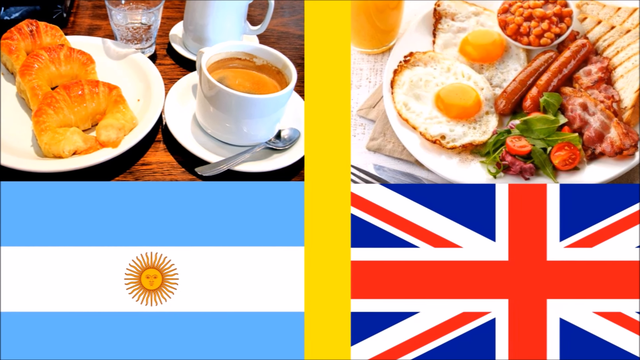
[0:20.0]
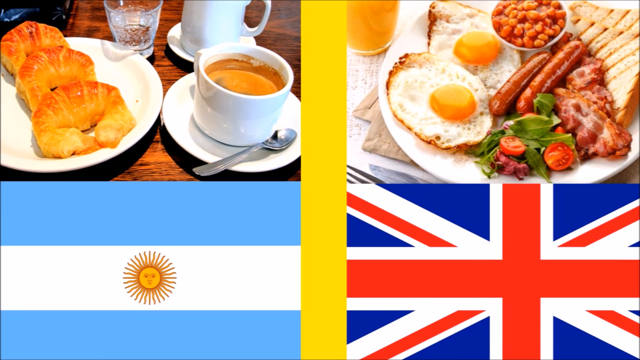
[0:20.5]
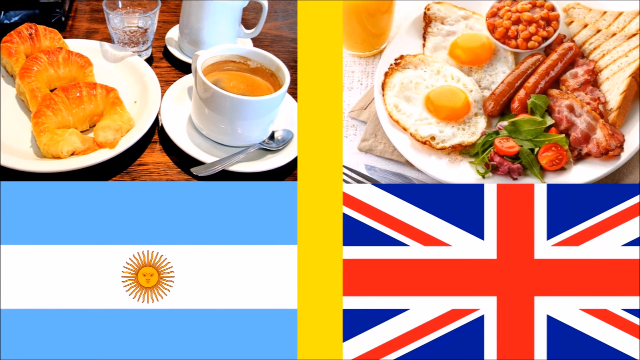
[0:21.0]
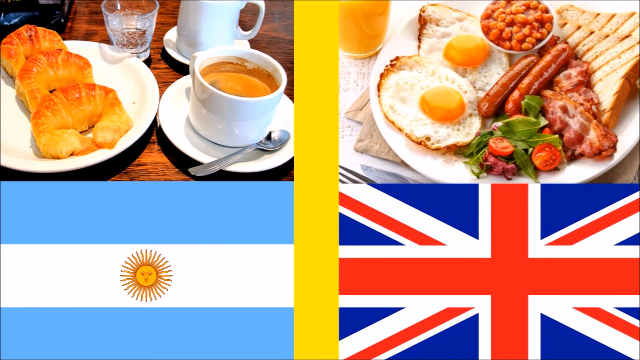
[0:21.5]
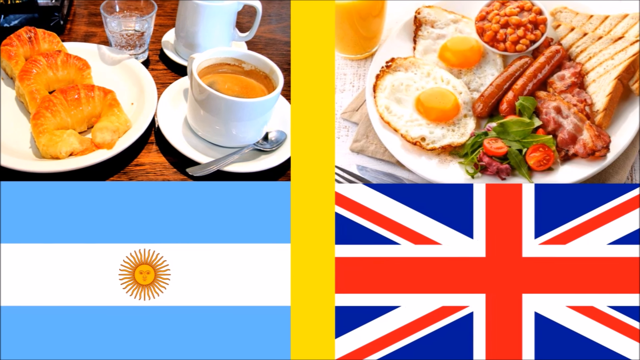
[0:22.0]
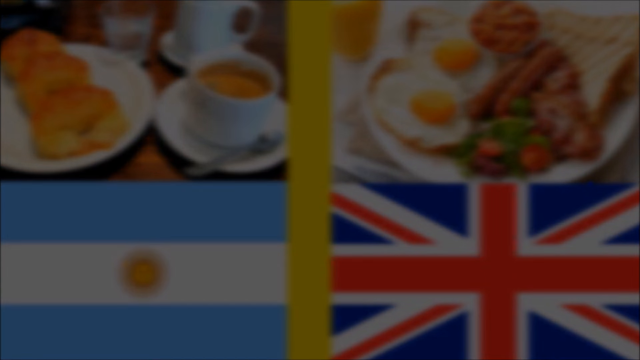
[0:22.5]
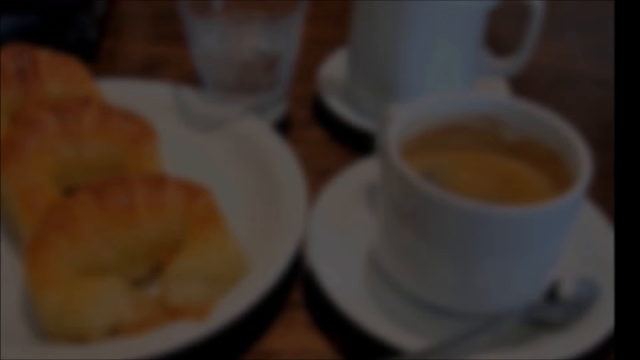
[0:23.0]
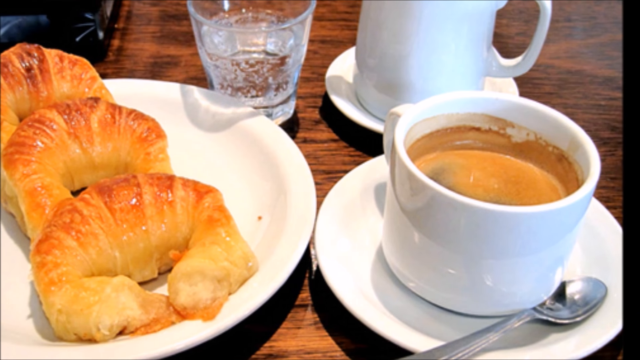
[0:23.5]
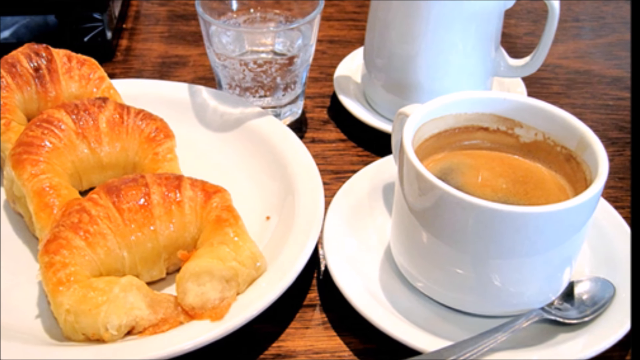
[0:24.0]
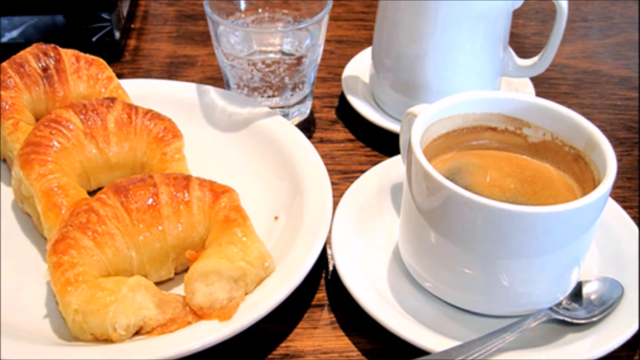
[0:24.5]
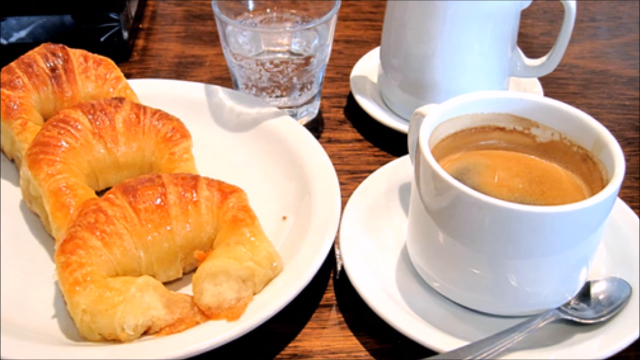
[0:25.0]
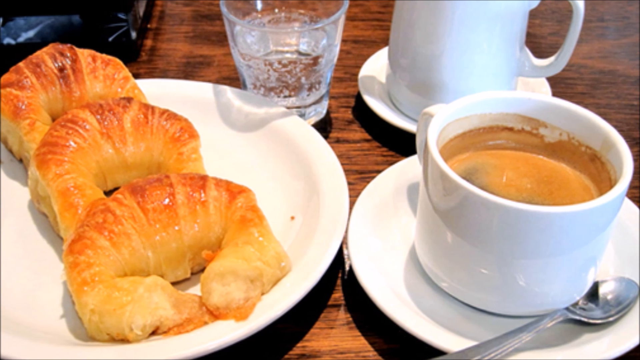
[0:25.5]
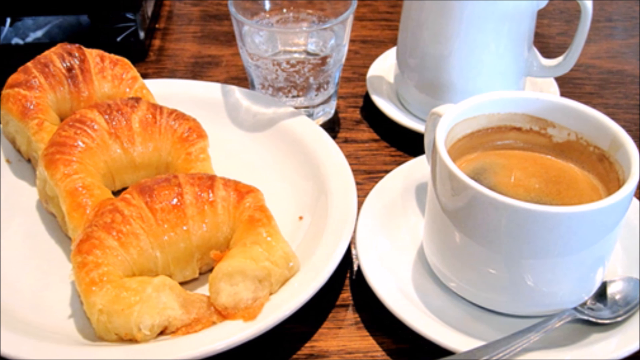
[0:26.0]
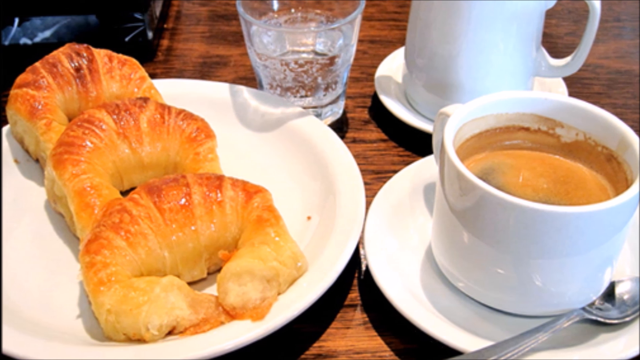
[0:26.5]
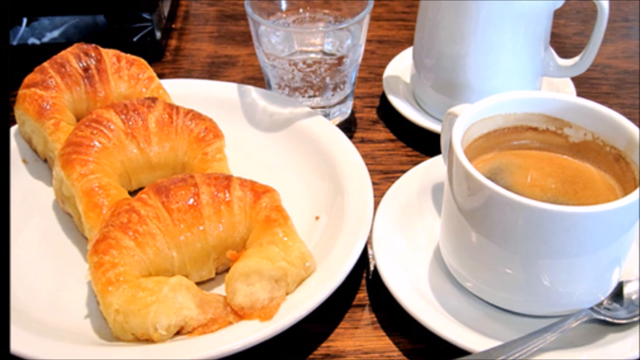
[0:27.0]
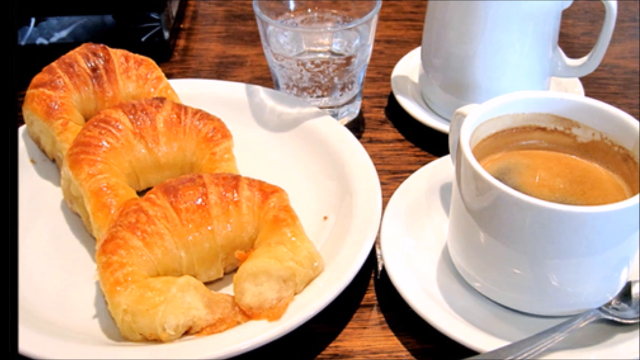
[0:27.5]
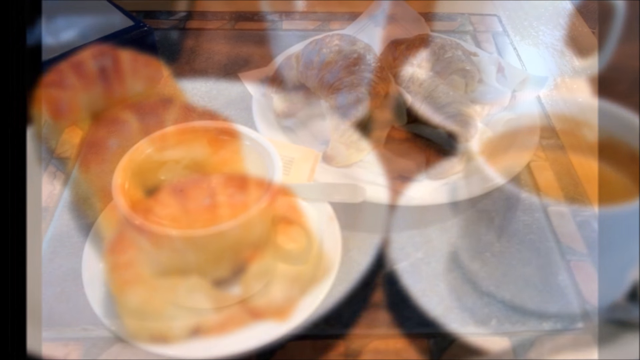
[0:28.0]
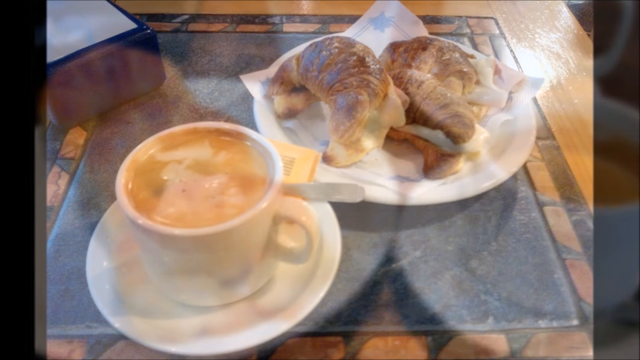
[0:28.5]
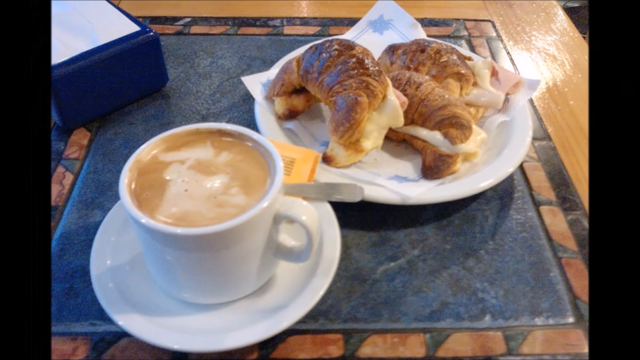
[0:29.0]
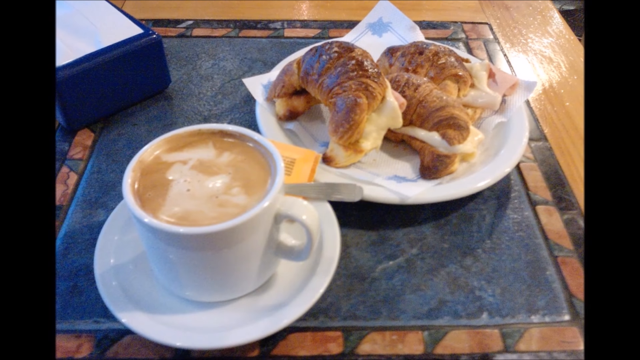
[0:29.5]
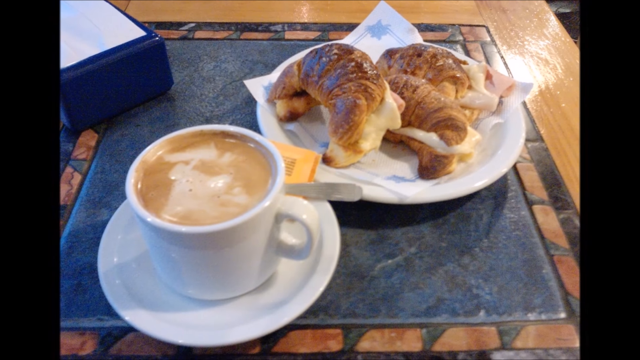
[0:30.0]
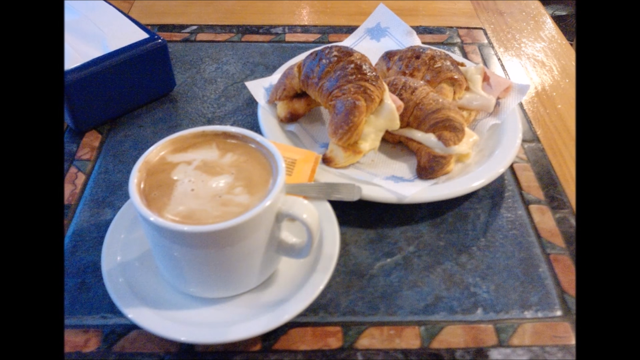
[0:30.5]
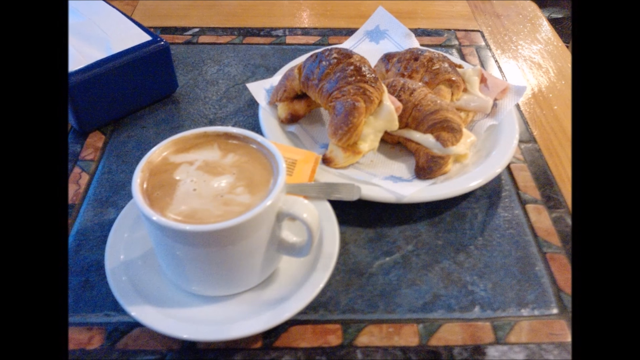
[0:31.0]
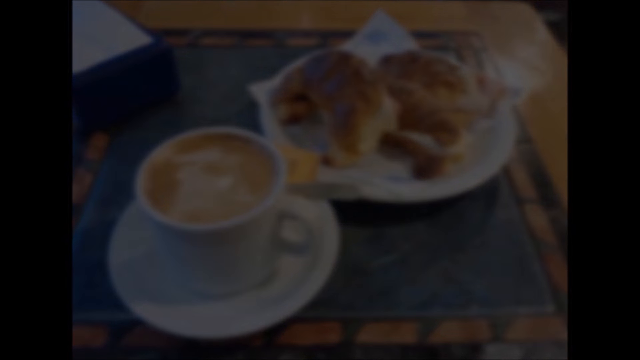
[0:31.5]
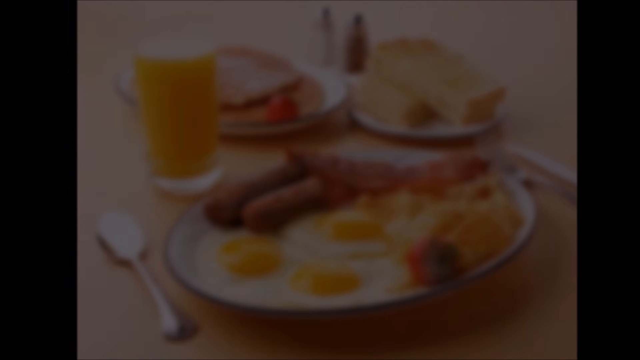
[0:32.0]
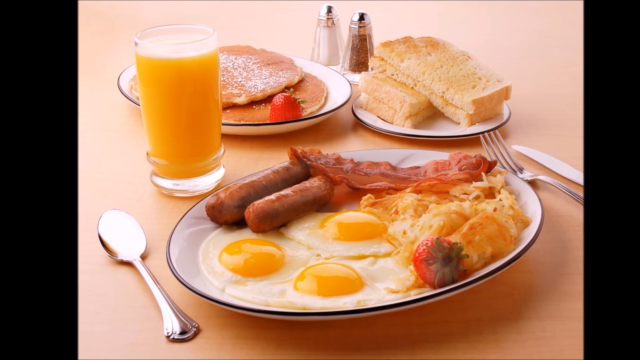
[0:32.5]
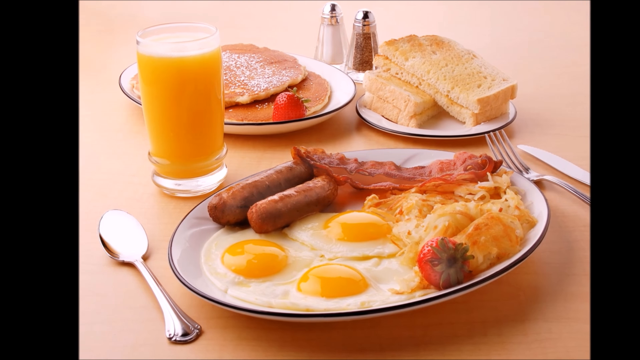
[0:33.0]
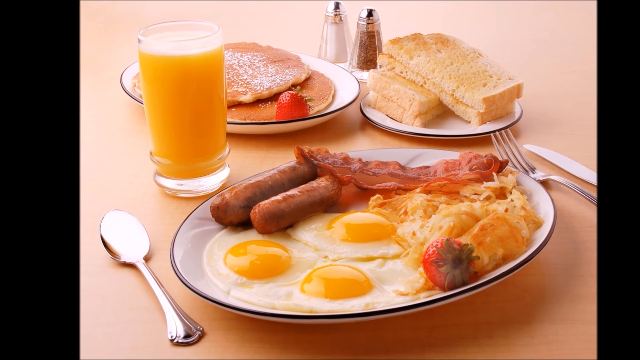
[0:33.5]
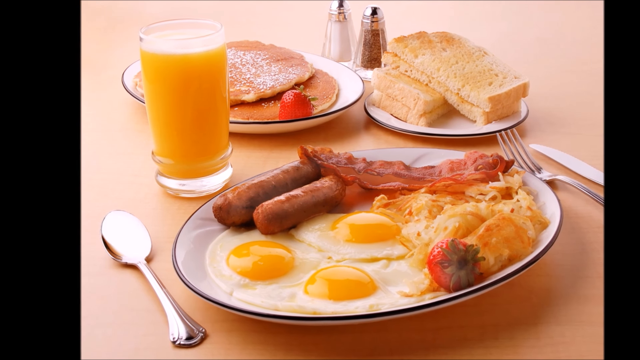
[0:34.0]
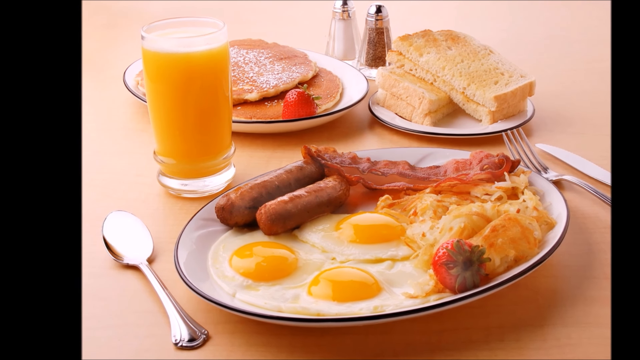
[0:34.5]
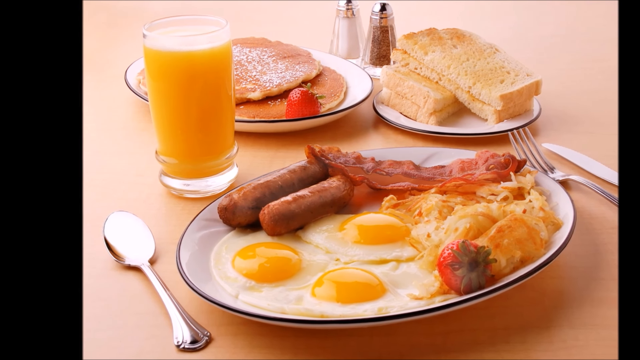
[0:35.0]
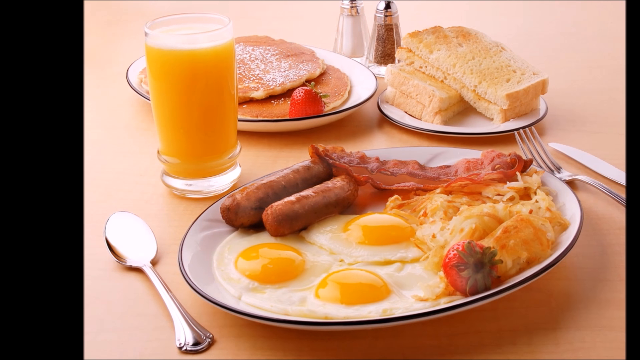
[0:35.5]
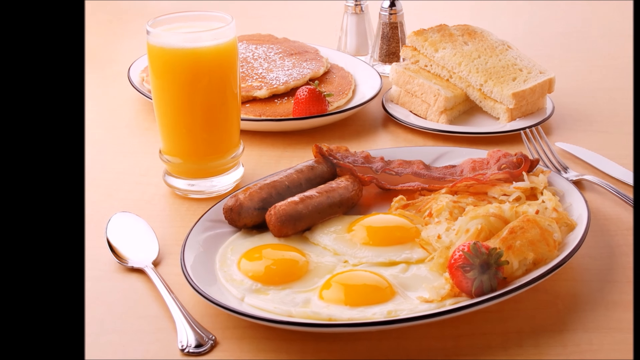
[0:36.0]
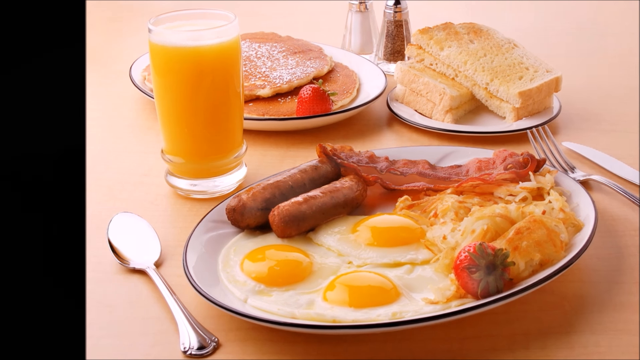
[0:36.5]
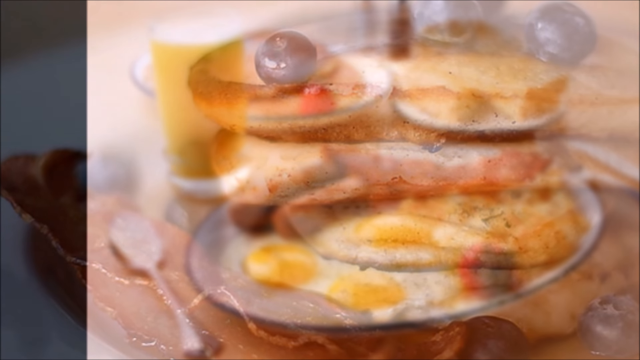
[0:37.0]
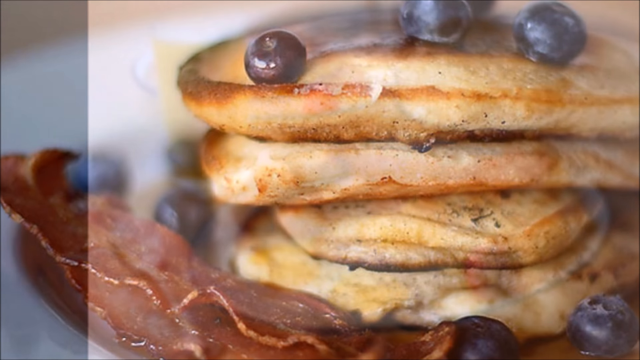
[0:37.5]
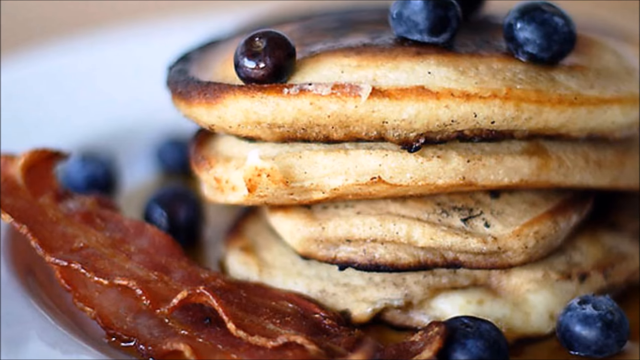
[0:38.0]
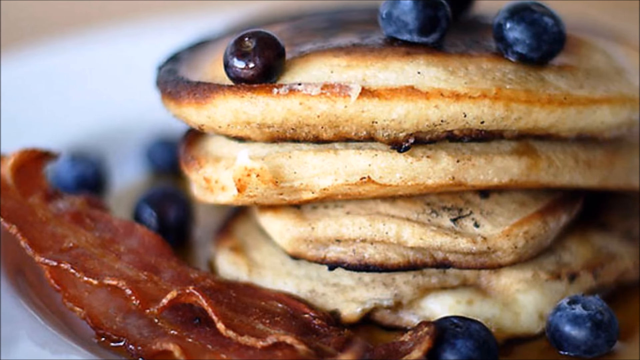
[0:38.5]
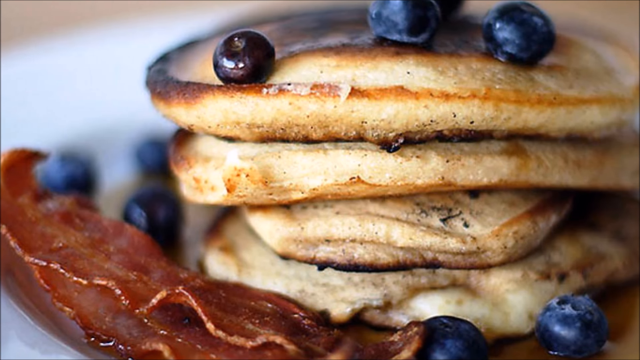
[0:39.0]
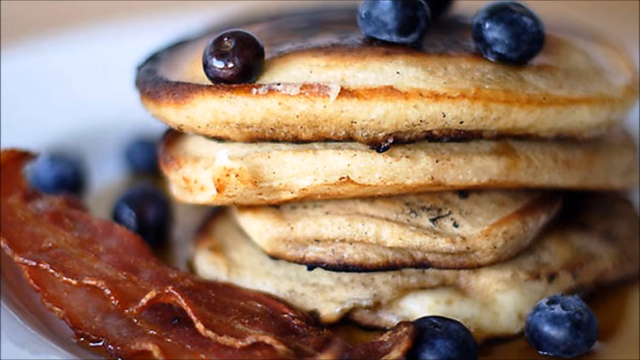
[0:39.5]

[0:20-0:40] The food at the upper left is on a wooden table: a white plate with three croissants on it on the left, a glass cup above that, a white mug on a white saucer to the right of that, and in front of that a white coffee cup on a saucer with a teaspoon lying on the saucer in front of the cup. On the right side, above the British flag, are a cup of orange juice at the upper left and a large white plate with two fried eggs on the left, two sausages to the right of them, a small cup of beans above the sausage, a diagonally cut piece of toast to the right of that, a heap of bacon below that, and, to the bottom left of the bacon, a salad with two cut tomatoes. The view zooms out a little and transitions to an image of a croissant on a plate with glasses, a cup of tea and a pan, then pans to the left. It fades to another image of a wooden table with a stone square inlay. On the inlay, at the upper right, is a white plate with three croissants, halved and filled with cheese, on top of a napkin. At the bottom left is a saucer with a coffee cup heavily filled with cream, with white cloudy areas on top of the coffee. A spoon handle and a packet of artificial sweetener are behind the coffee cup, partially obscured, and at the upper left is a blue plastic box. It fades to another breakfast: a white plate with a dark blue rim in front holds three fried eggs, a strawberry, hash browns on the right, and sausages and bacon in the upper area. A spoon is to the left of the plate, with a glass of orange juice filled to the top above it. A plate of pancakes topped with powdered sugar and a strawberry is on the left behind the orange juice, and four slices of bread on a saucer are to the right of the pancakes. To the right of the breakfast plate are a fork and then a knife. The view zooms in slightly on the orange juice and cuts to an image of a pancake and bacon.